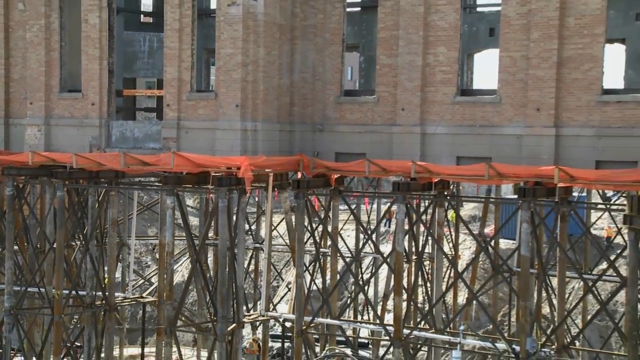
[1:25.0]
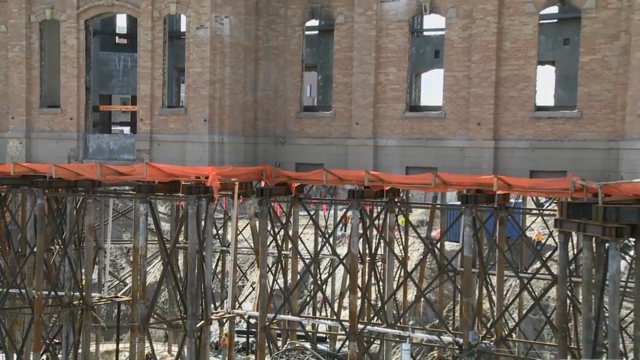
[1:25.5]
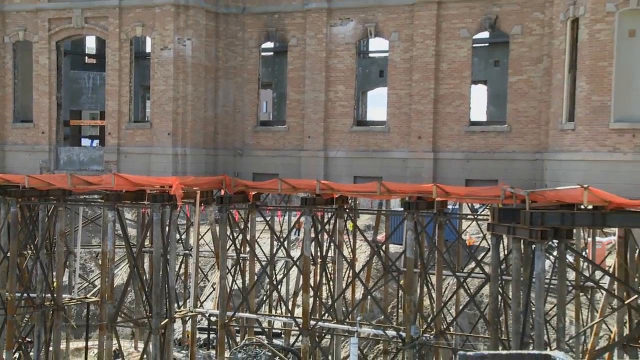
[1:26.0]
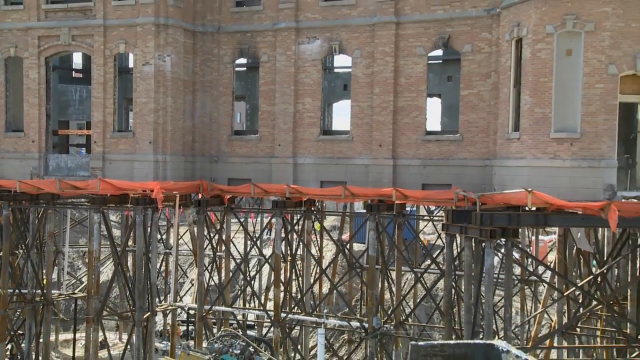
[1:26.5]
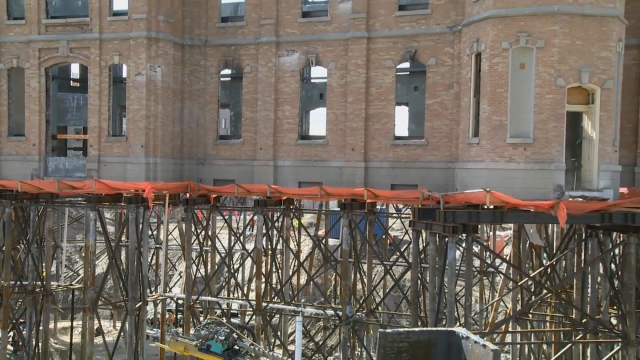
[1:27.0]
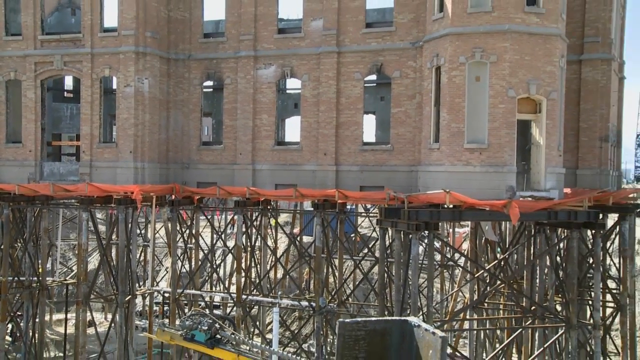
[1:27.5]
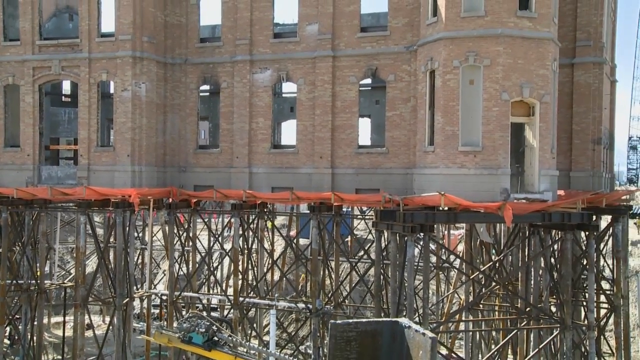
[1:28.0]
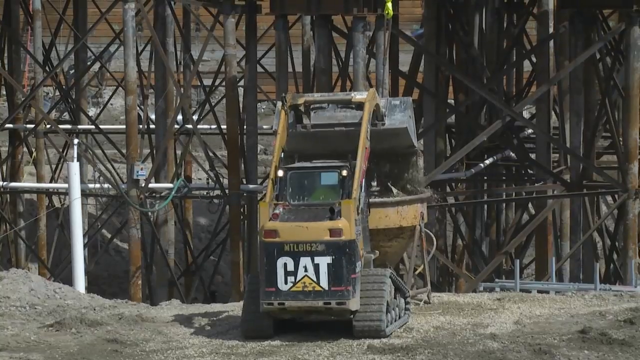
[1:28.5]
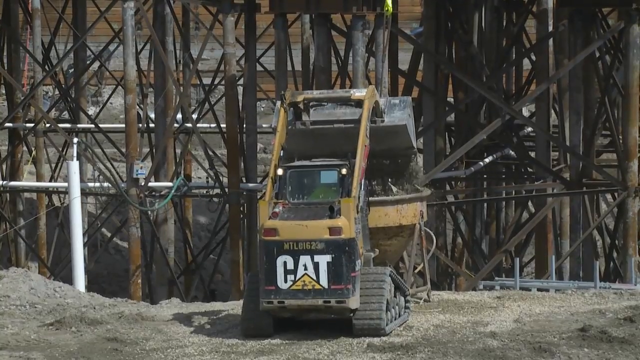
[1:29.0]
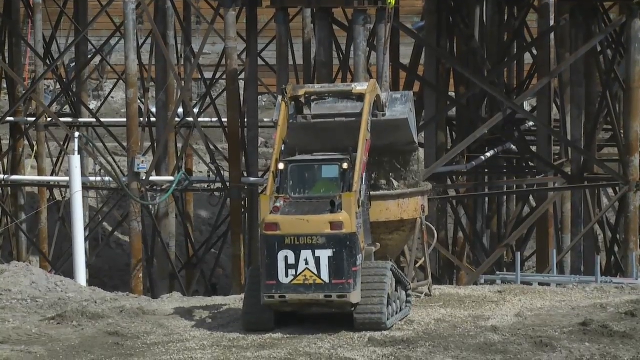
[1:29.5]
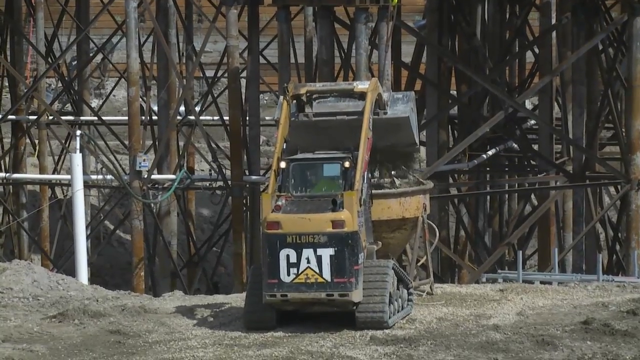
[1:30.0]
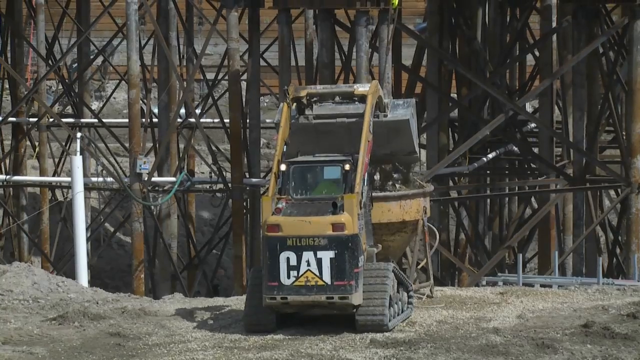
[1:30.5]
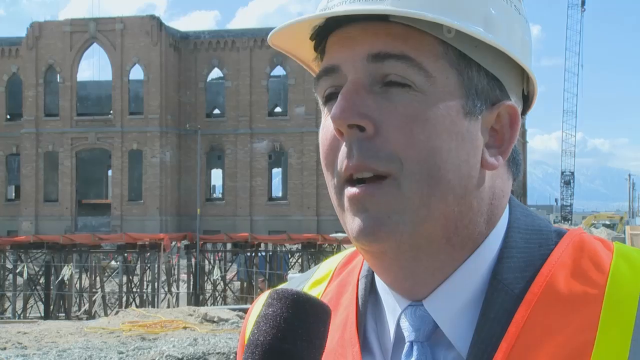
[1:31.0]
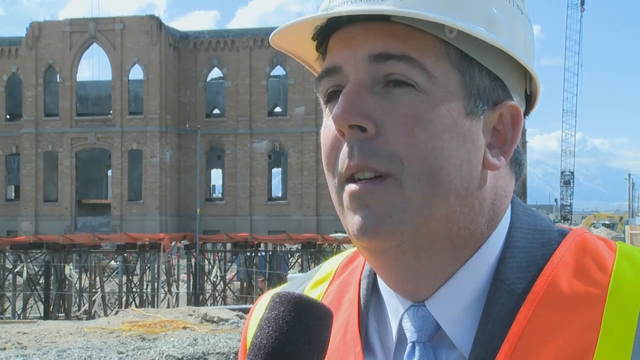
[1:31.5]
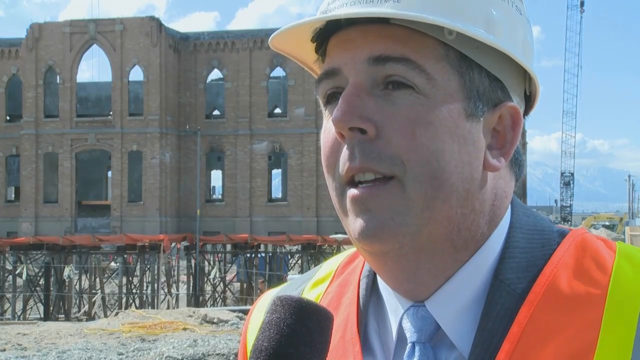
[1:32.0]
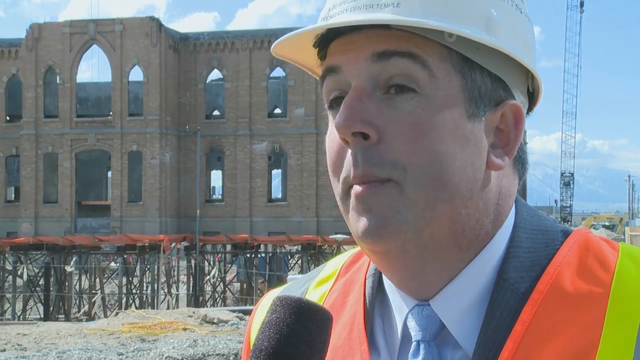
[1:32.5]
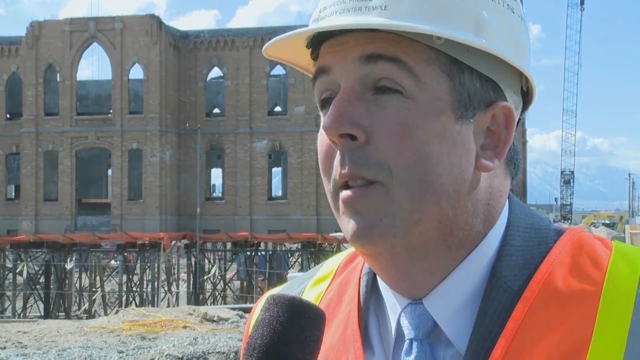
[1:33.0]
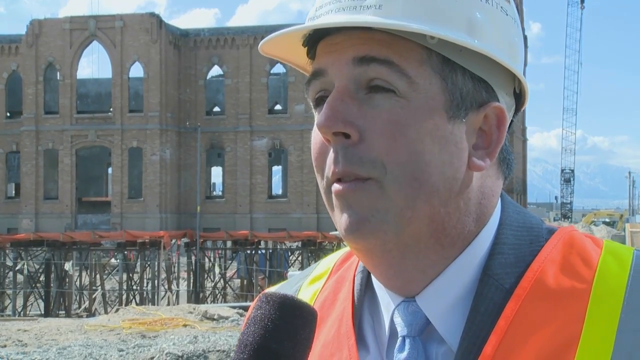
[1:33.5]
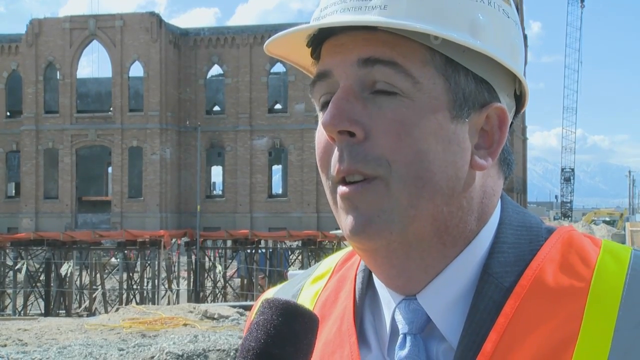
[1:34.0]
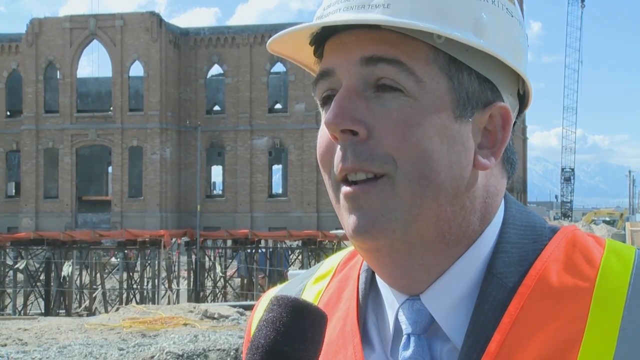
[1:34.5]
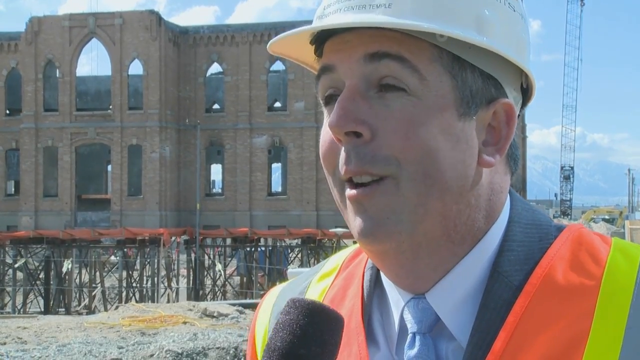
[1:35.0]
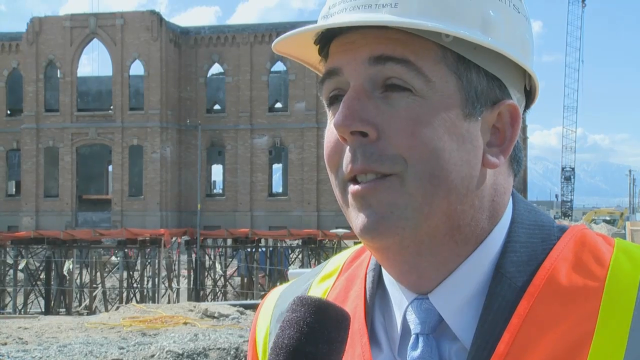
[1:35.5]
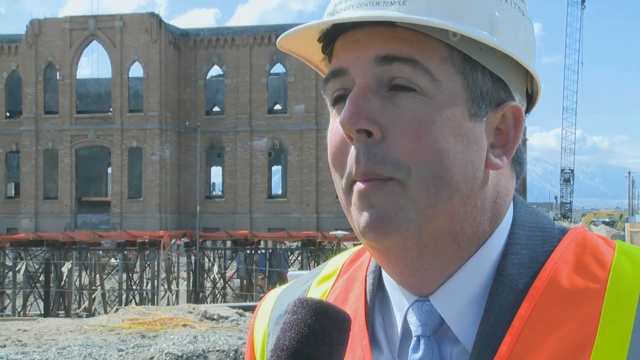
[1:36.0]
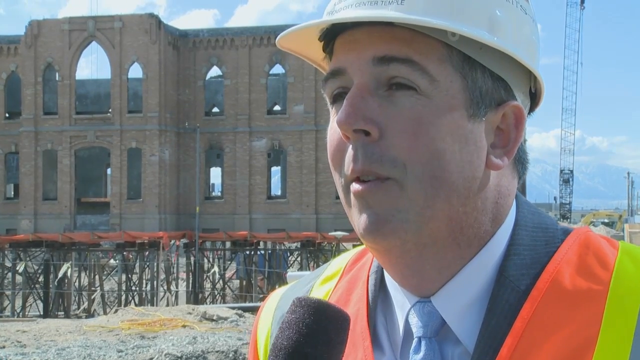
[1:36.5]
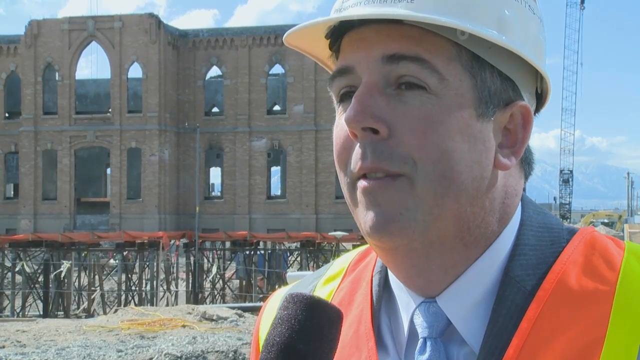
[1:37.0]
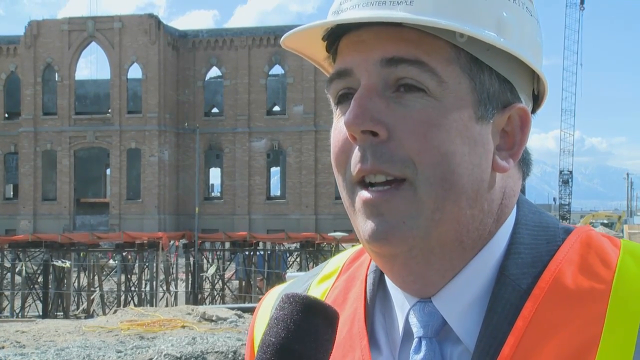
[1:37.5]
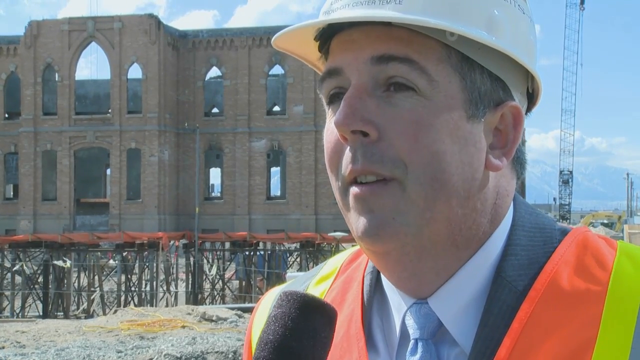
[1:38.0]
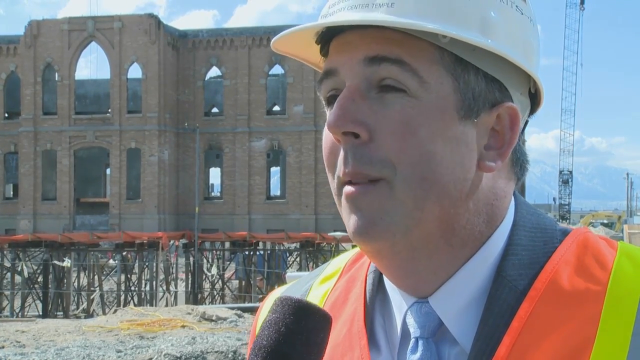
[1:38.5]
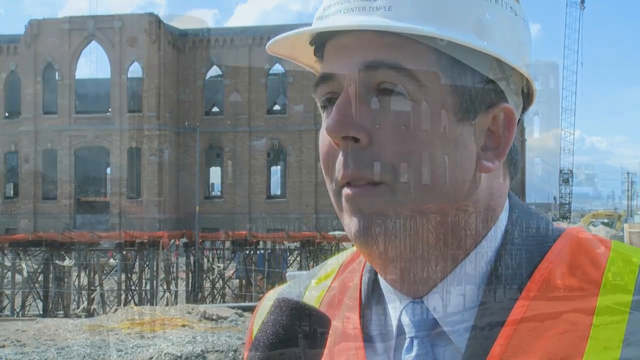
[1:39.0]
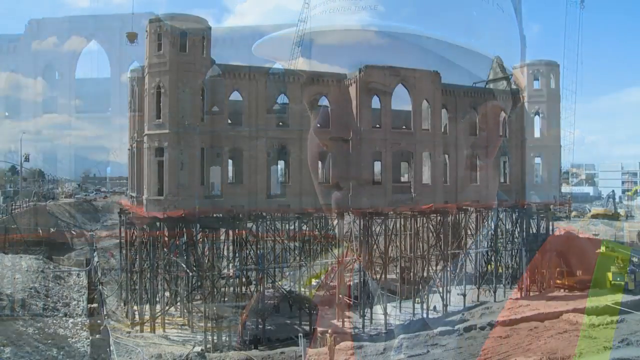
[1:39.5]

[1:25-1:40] An exterior shot of the building shows a CAT piece of equipment dumping something in. The project manager talks with a reporter; he wears something like a suit with a small safety vest. After another exterior shot, the CAT dumps what looks like dirt into some sort of cylinder, another machine. An exterior shot shows the building under construction, with just one person present. The video returns to the project leader talking and then to the CAT dumping material. The setting remains outside.